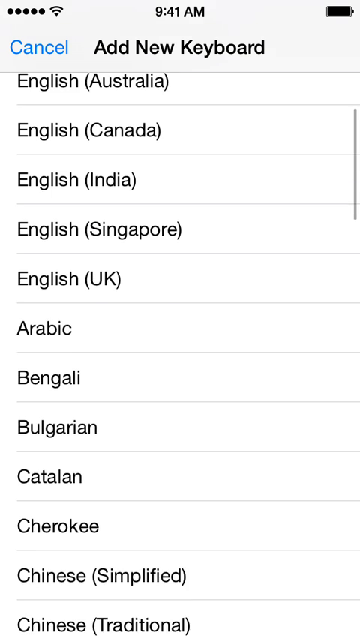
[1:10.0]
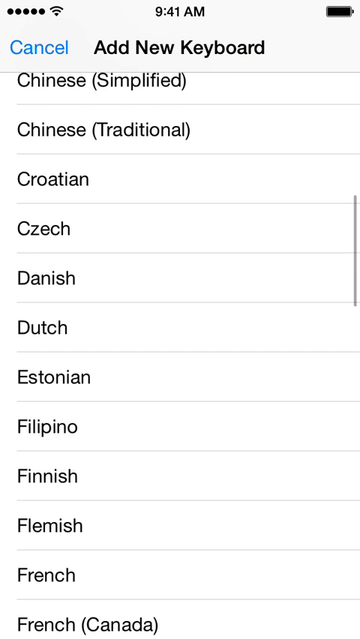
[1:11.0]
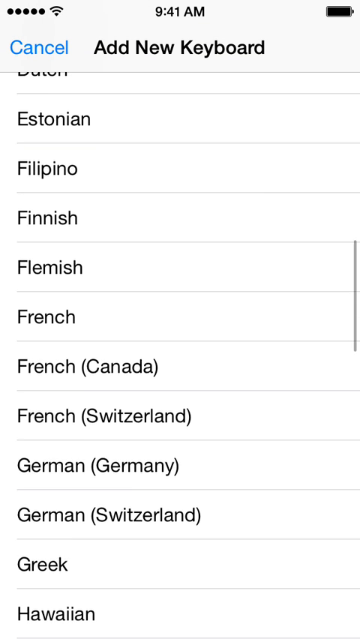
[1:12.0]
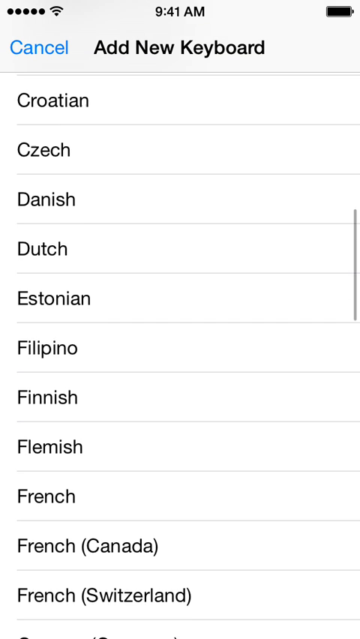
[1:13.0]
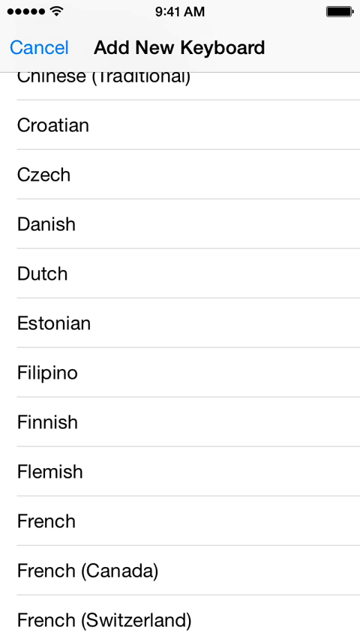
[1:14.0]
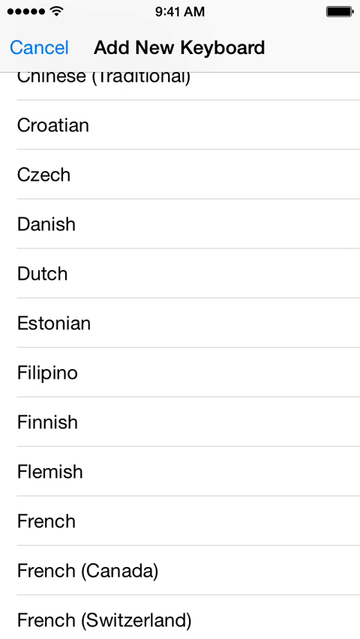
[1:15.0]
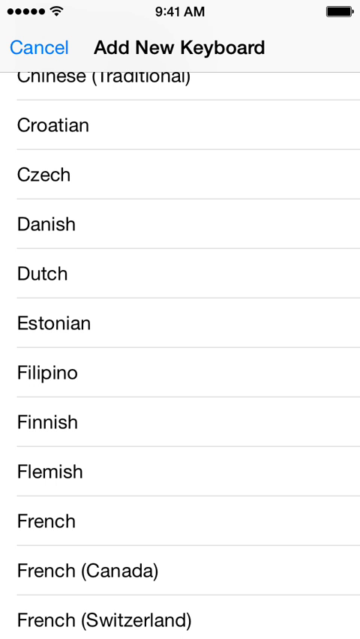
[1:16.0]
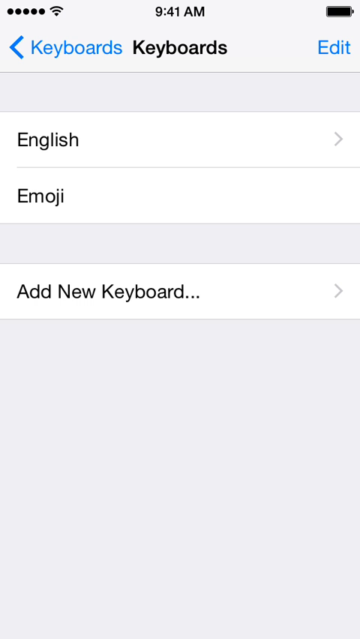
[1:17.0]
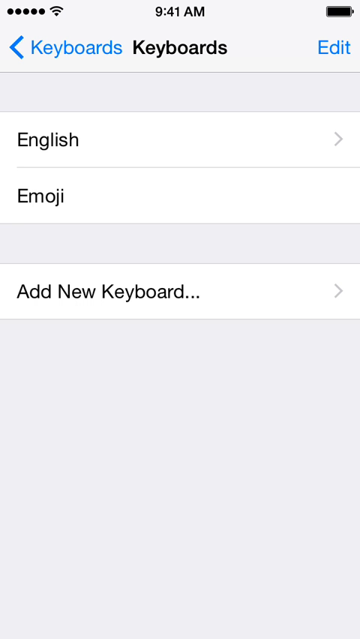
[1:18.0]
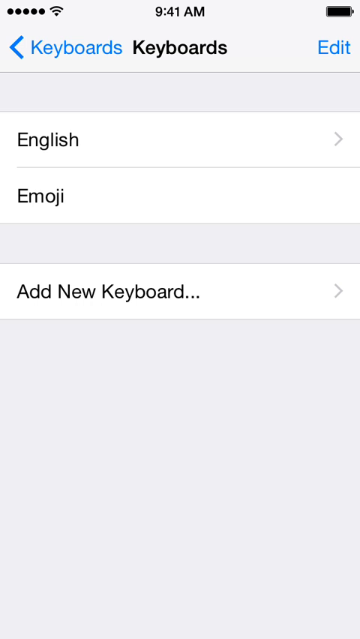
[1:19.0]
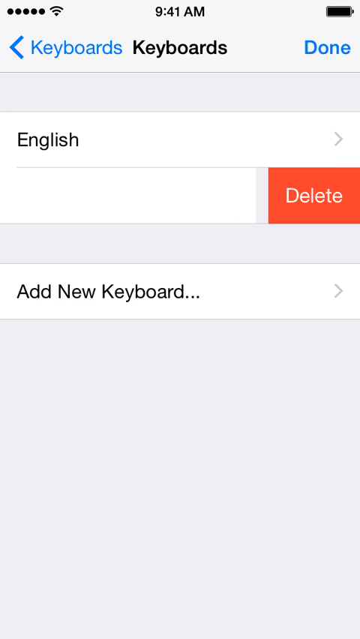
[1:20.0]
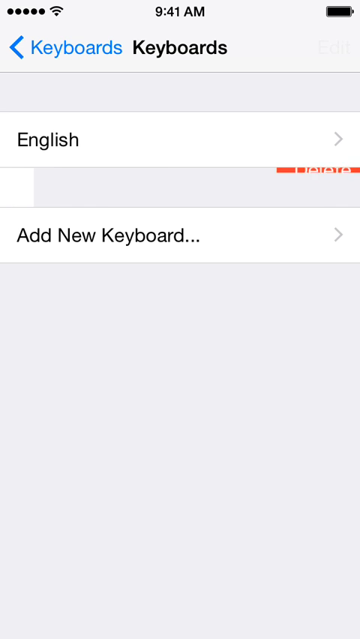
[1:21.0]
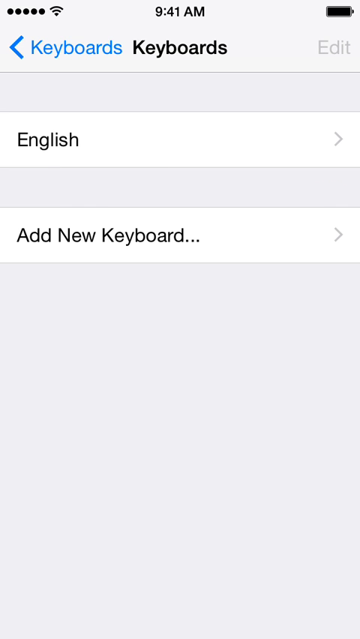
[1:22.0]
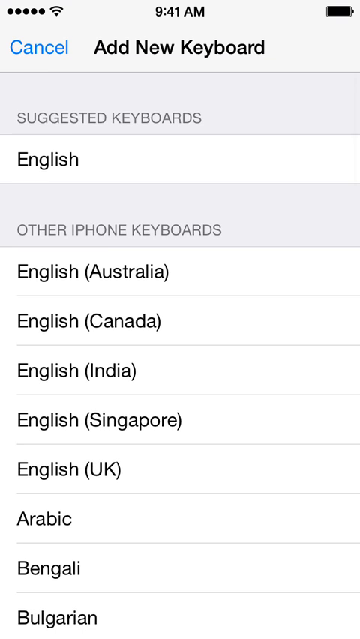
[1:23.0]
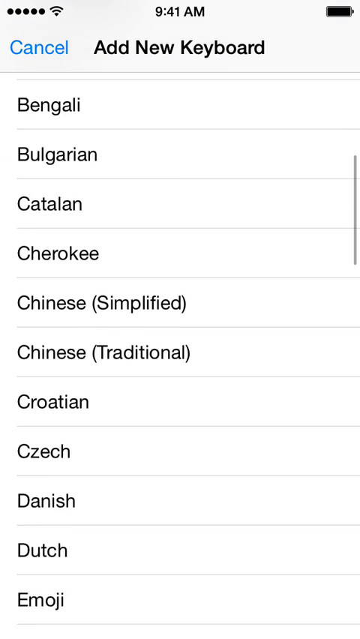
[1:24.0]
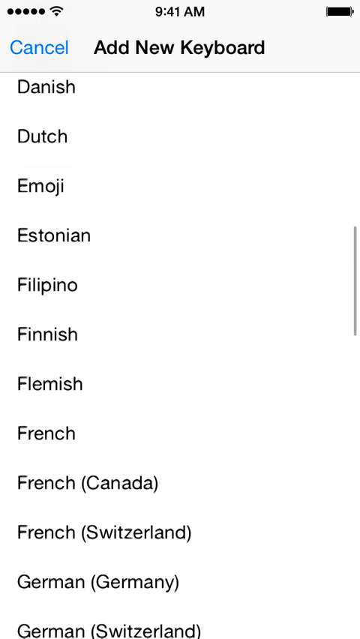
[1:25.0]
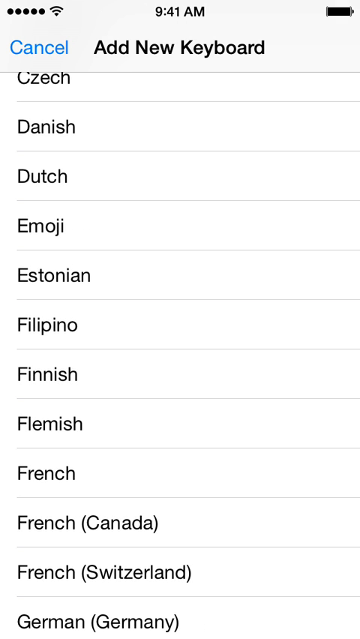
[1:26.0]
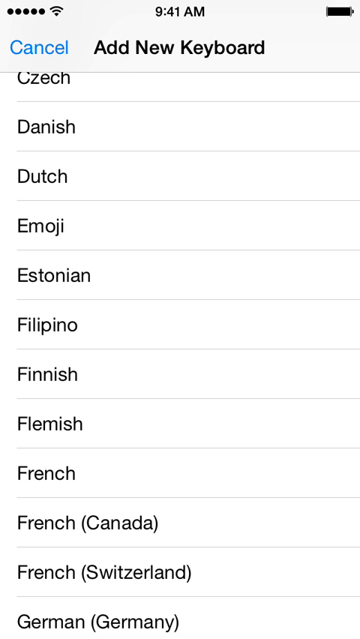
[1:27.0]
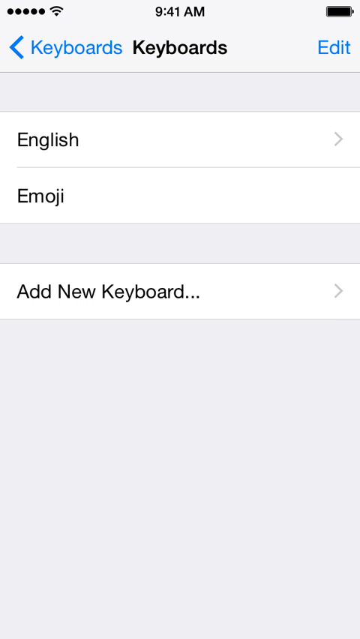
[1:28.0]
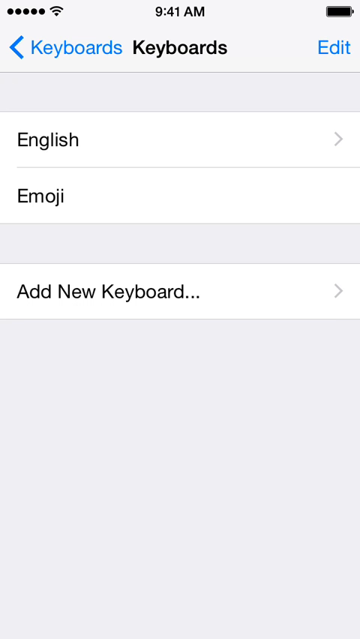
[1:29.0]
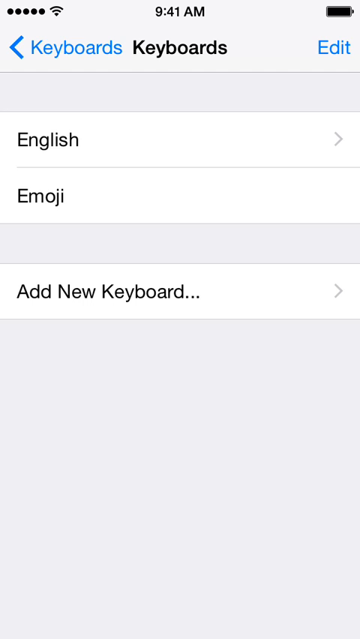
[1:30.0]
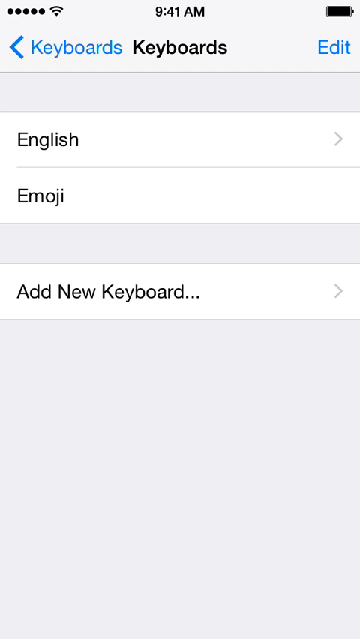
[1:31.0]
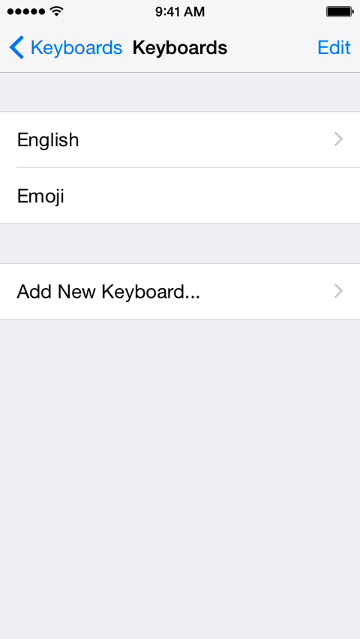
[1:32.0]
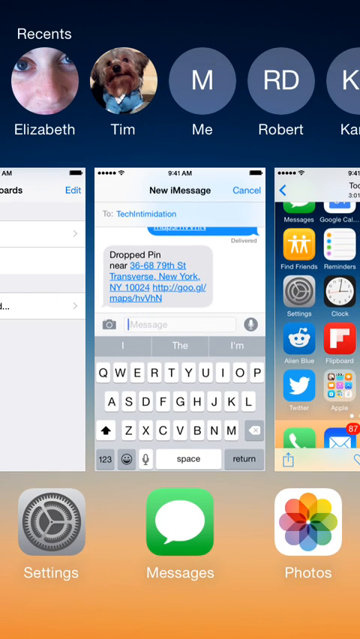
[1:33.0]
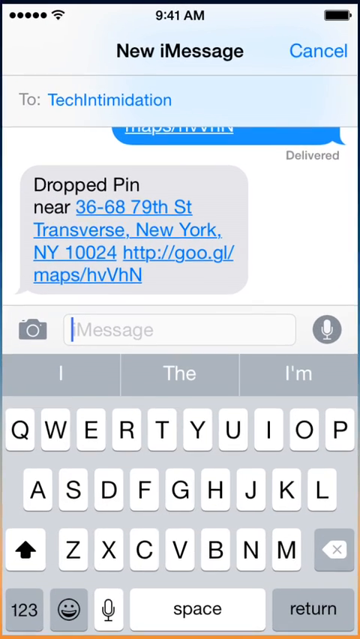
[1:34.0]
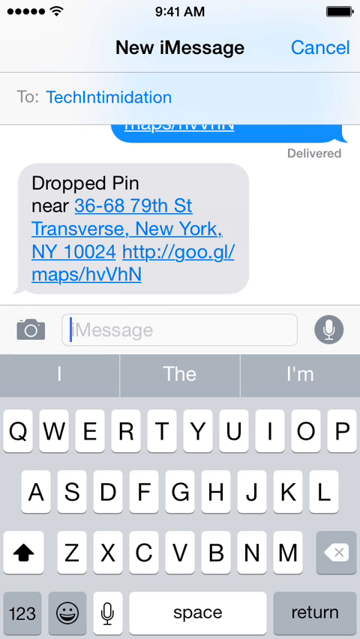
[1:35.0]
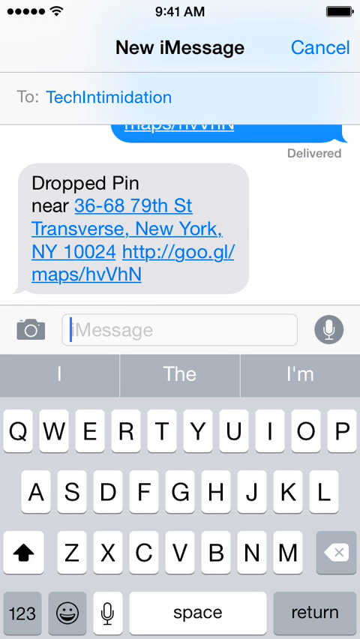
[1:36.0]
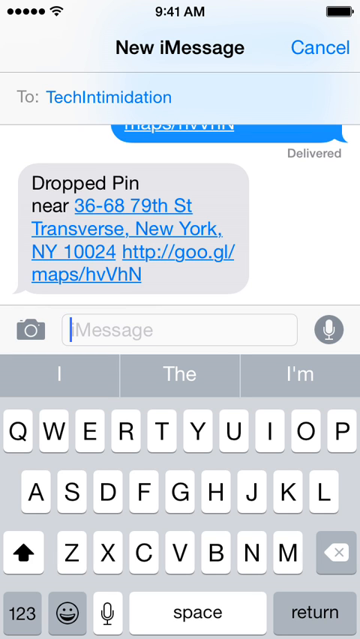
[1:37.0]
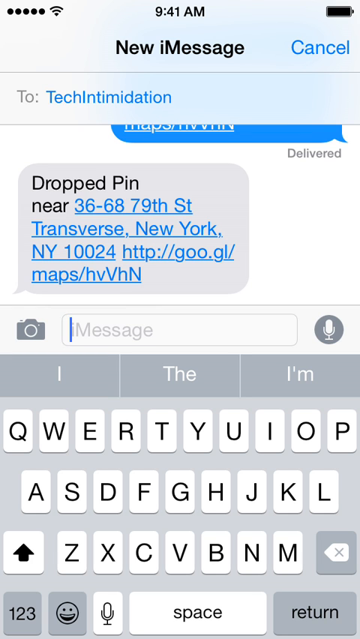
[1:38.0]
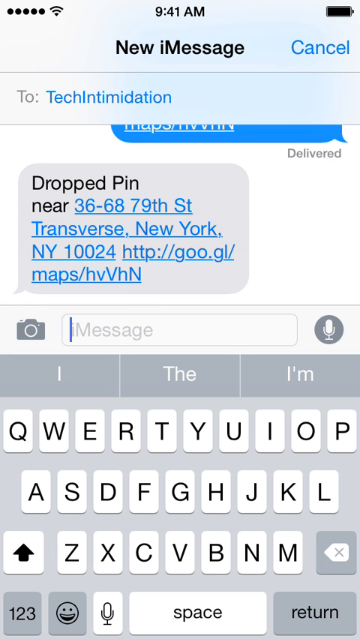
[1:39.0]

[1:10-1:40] The keyboard list is scrolled down, showing other options such as Bulgarian, Catalan, Cherokee and Chinese Simplified. The user scrolls down, stops around the F section, then scrolls back up a little. They apparently do not select a new keyboard, as nothing is added to the keyboards when they return to that menu. They then slide over the emoji keyboard, revealing a delete option, and appear to delete the emoji keyboard. They tap add new keyboard again and scroll down to the DEF section, where emoji now appears among the new keyboard options. They add emoji back to the keyboards, then bring up the tabs view and go back into messages.